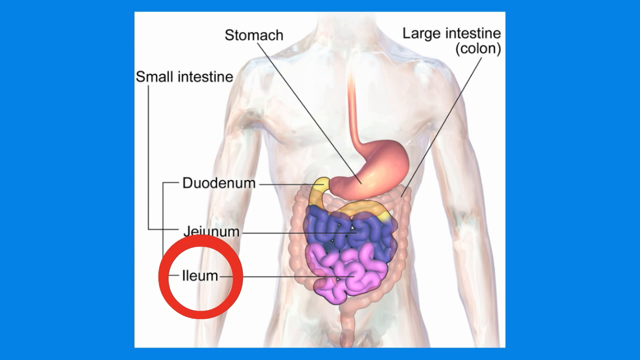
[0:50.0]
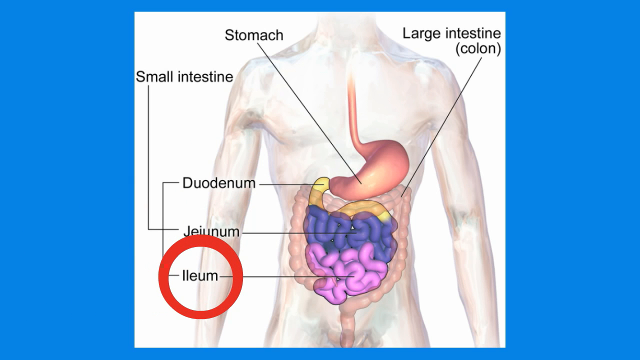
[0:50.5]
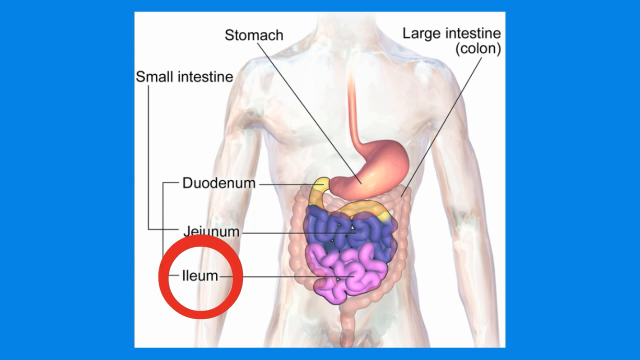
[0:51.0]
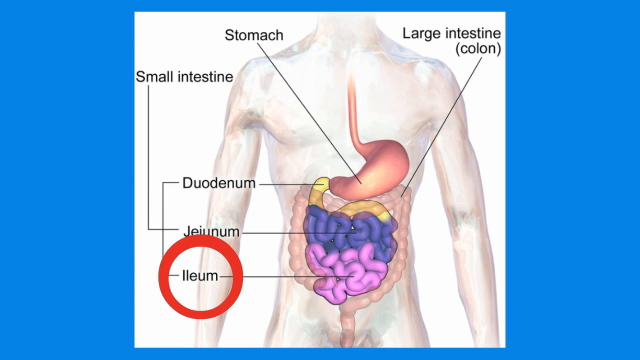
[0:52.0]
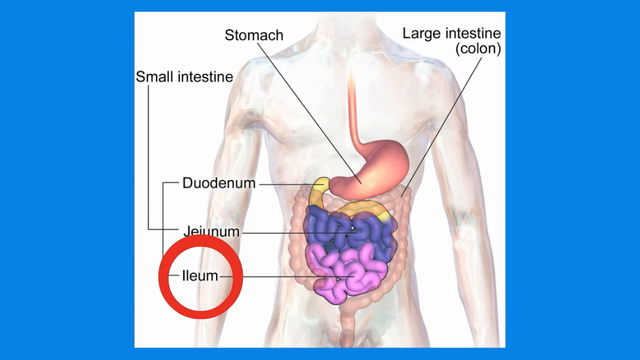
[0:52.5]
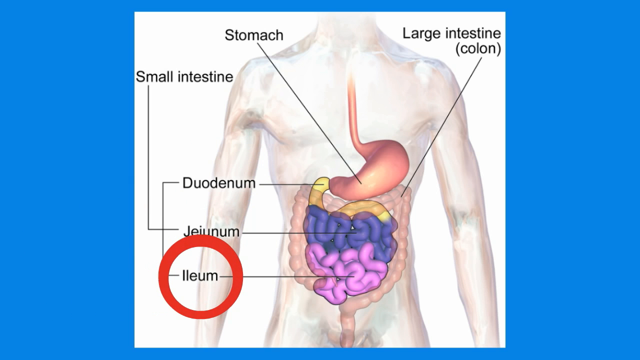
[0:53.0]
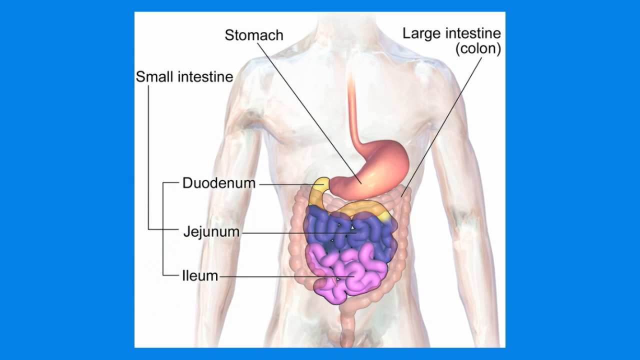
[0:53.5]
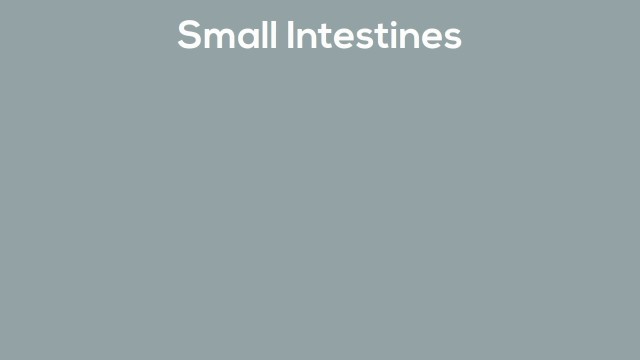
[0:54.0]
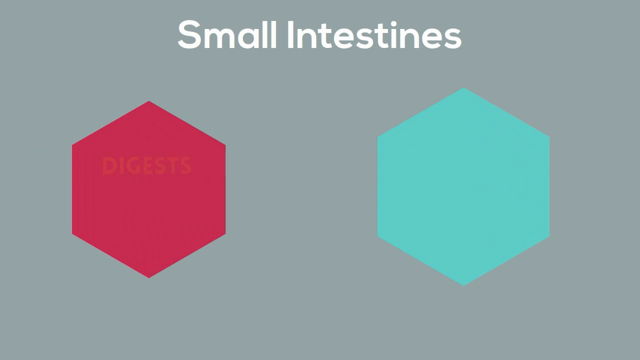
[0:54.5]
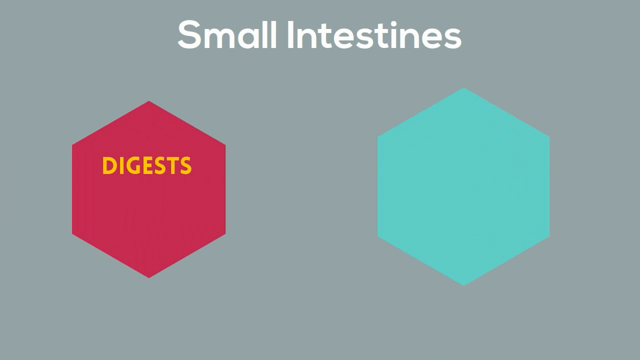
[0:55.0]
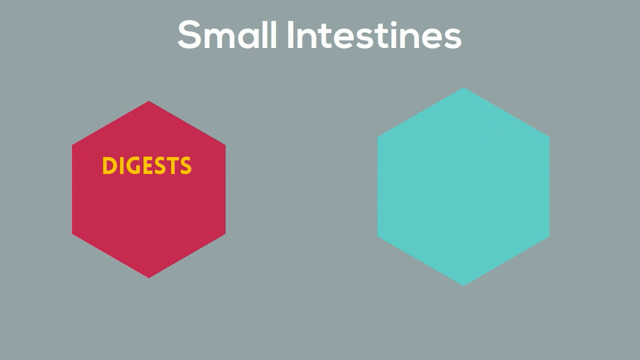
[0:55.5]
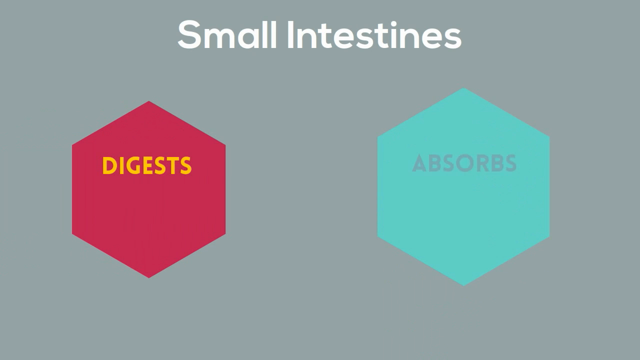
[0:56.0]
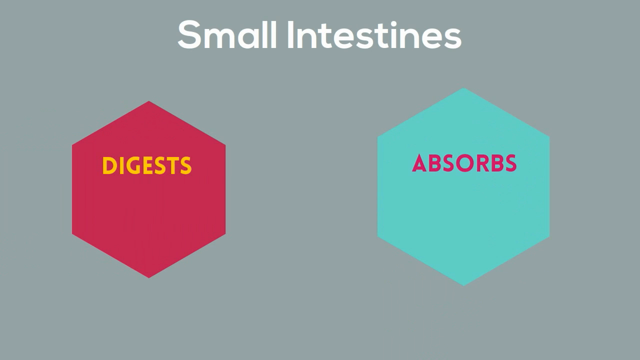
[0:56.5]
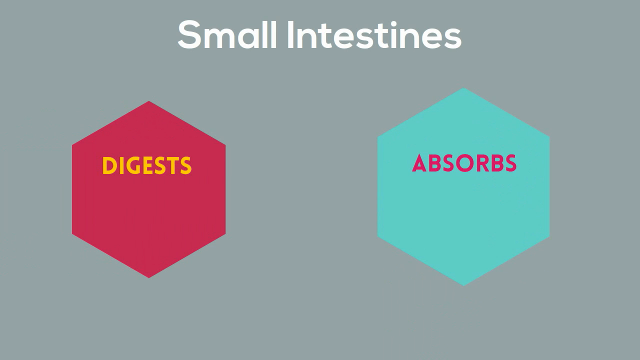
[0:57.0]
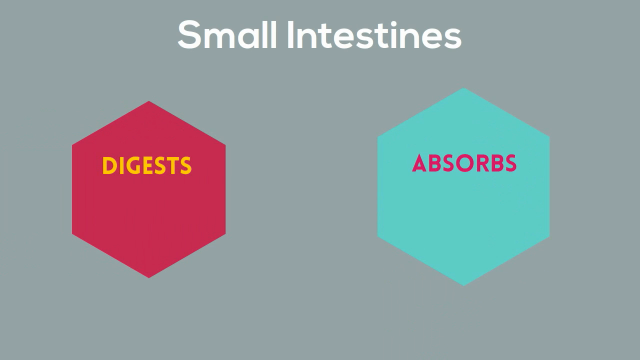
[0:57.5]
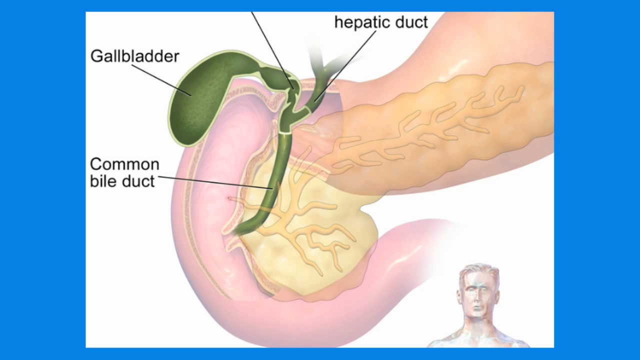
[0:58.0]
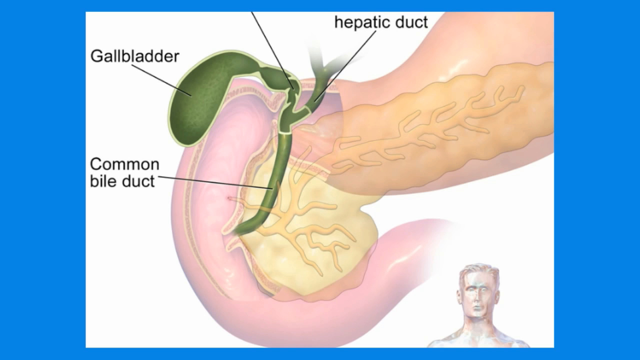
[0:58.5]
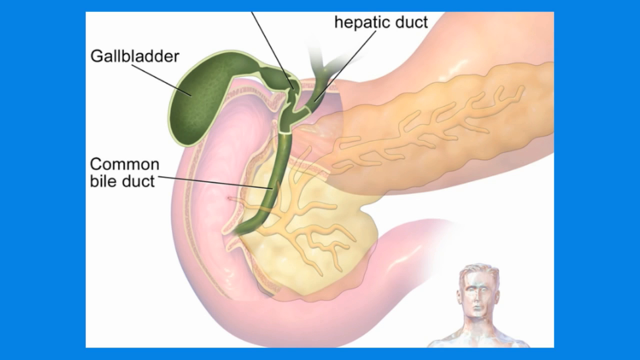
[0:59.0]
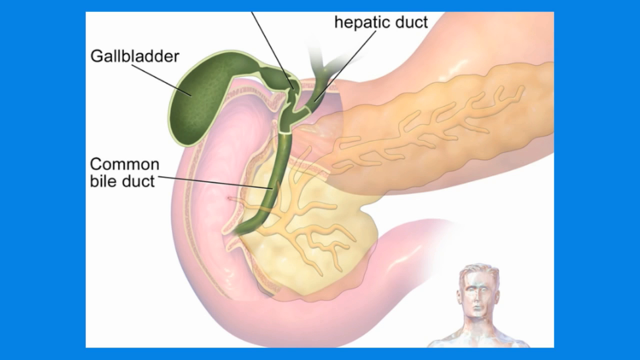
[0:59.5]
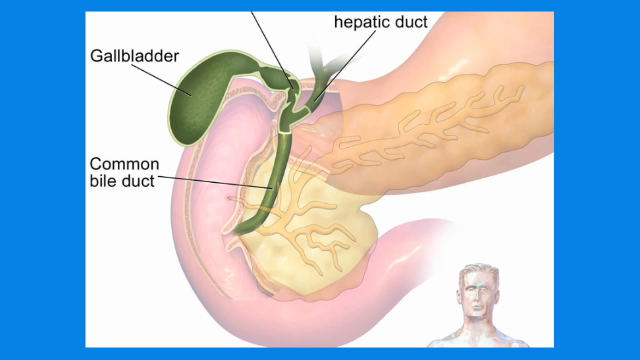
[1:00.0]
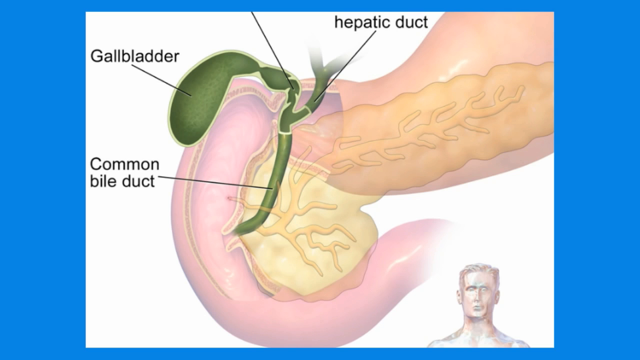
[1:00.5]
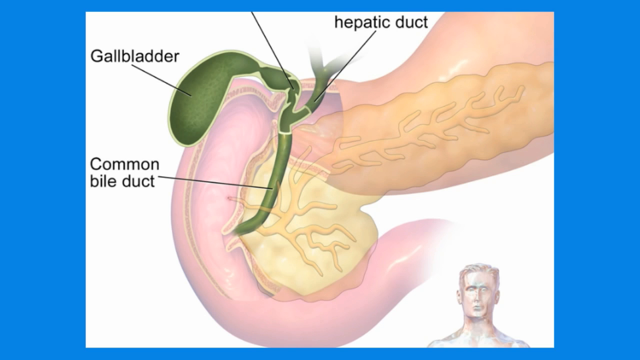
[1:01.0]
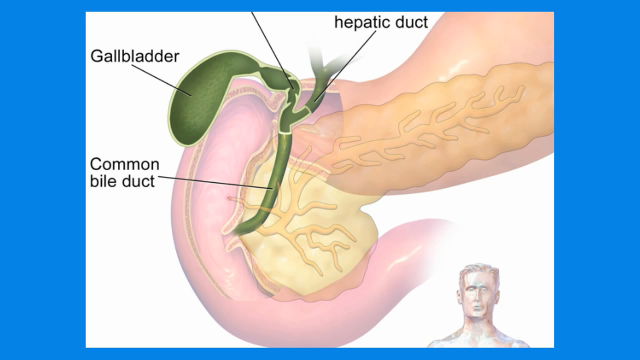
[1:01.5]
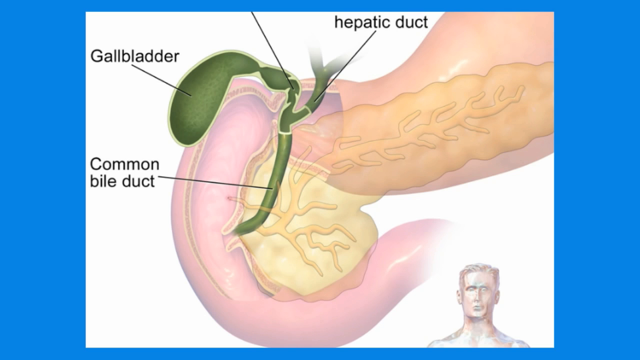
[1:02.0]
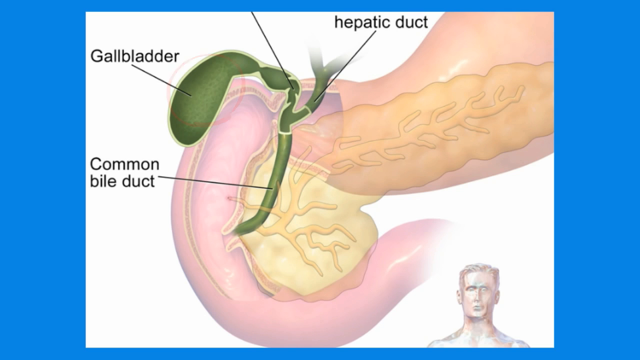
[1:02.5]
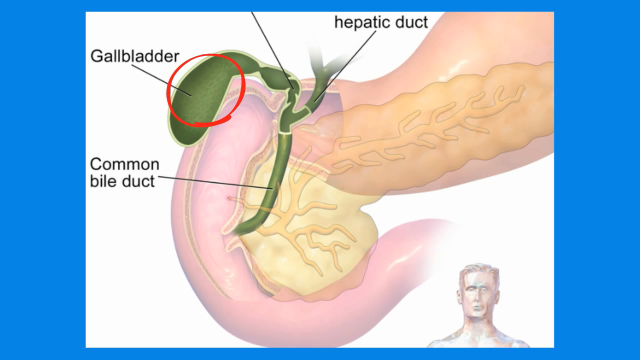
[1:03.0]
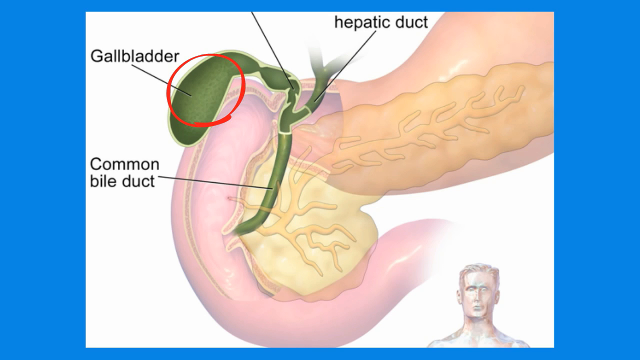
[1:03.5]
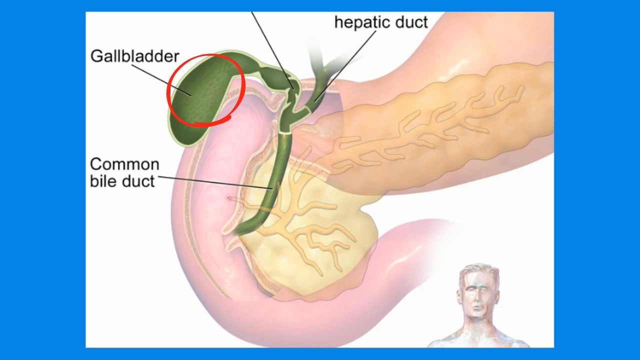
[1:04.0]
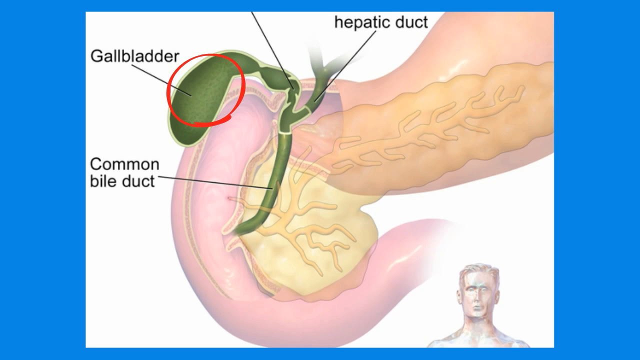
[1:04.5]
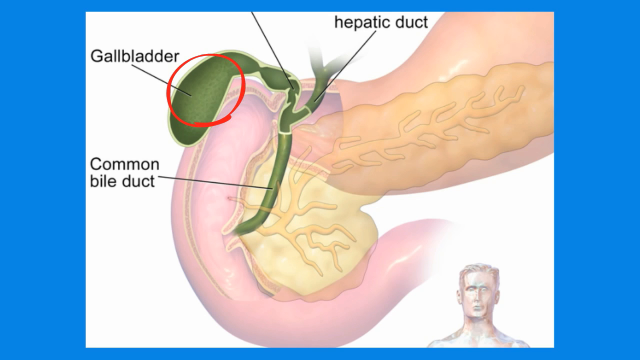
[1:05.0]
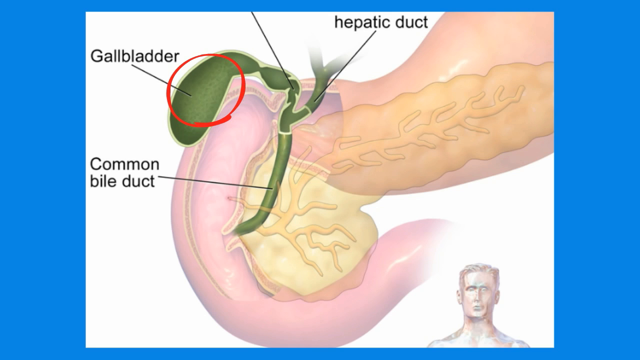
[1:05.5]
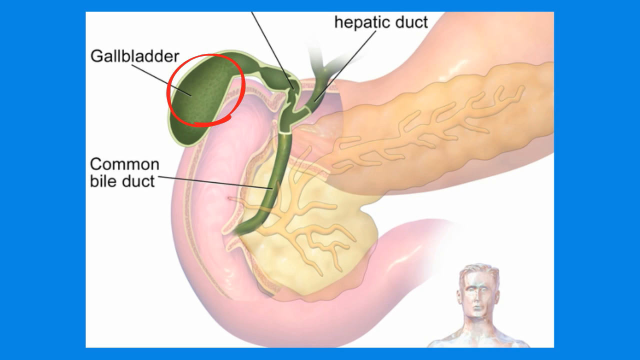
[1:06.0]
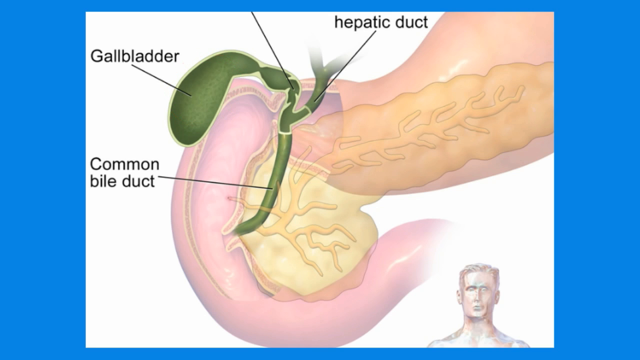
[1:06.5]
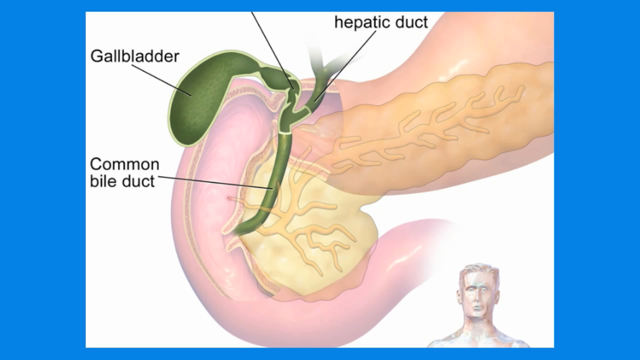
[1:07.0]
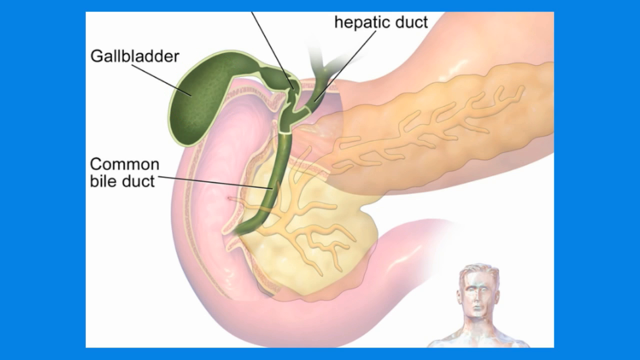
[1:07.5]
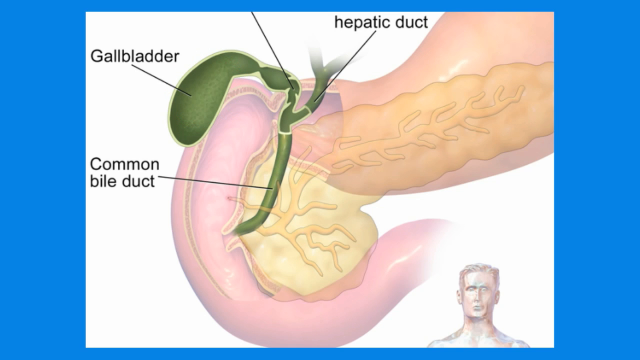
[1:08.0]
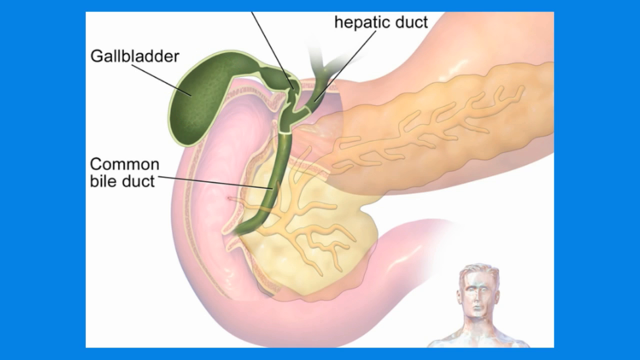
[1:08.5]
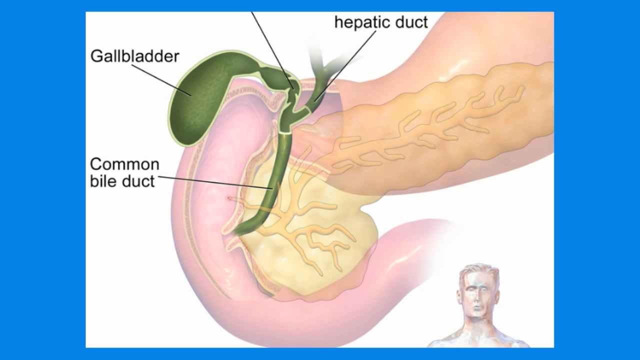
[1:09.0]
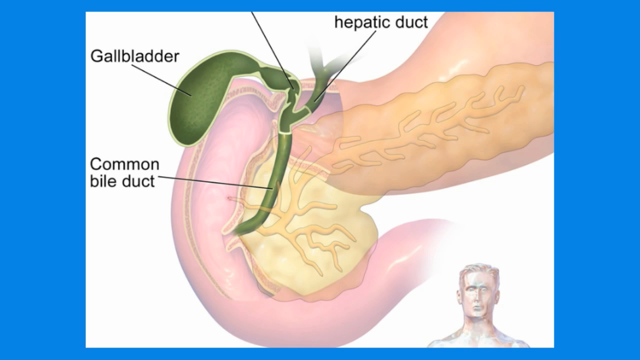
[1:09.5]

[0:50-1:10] An image of a human figure shows some clearly visible internal organs in different colors. The word "ILEUM", written in black, is circled in red; the circle is rather thick and seems to be wider at the top than at the bottom. Then there are two hexagons, a light blue one on the left and a red one on the right, each containing one word, with the white writing "SMALL INTESTINES" at the top center of the screen; the writing and the hexagons are on a green background. After that, an image of some internal organs appears, and specific parts of these organs are circled in red in sequence.